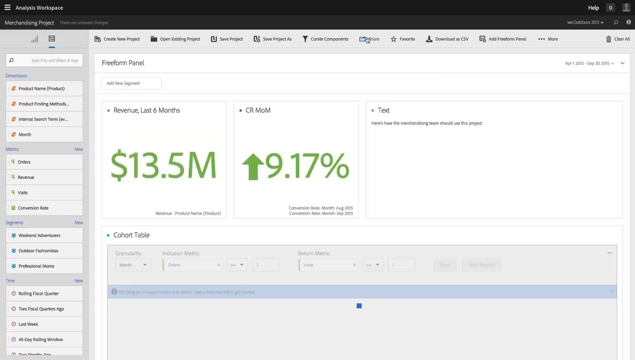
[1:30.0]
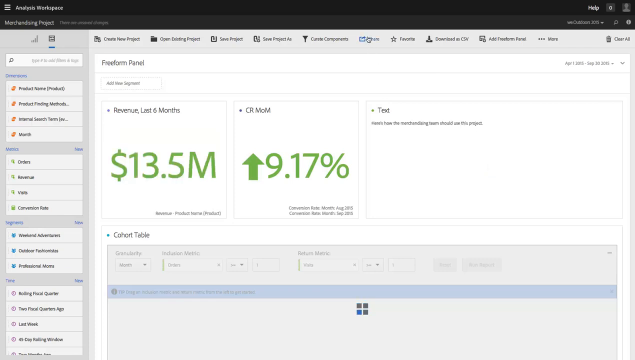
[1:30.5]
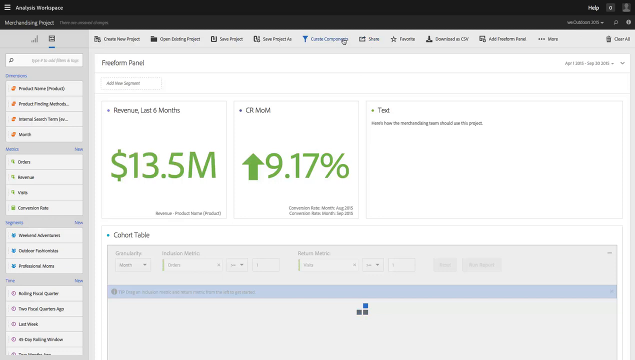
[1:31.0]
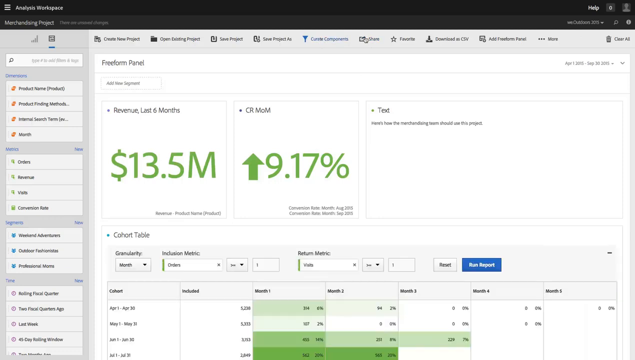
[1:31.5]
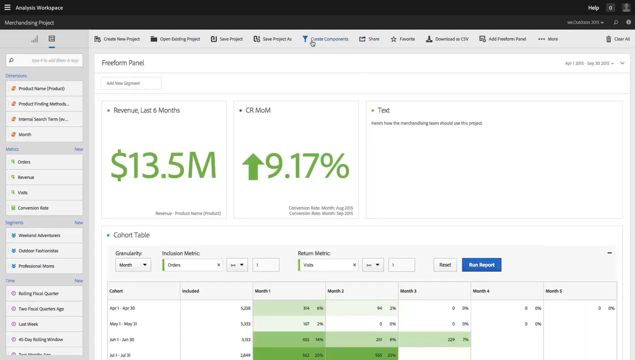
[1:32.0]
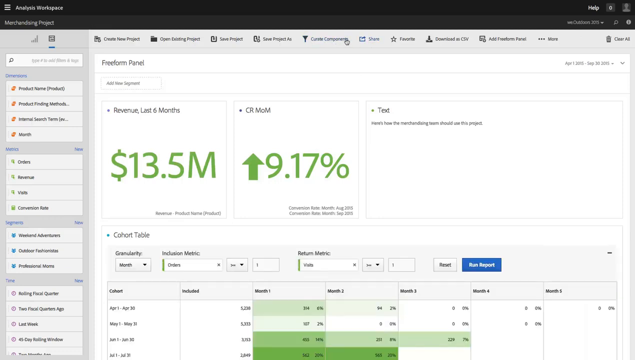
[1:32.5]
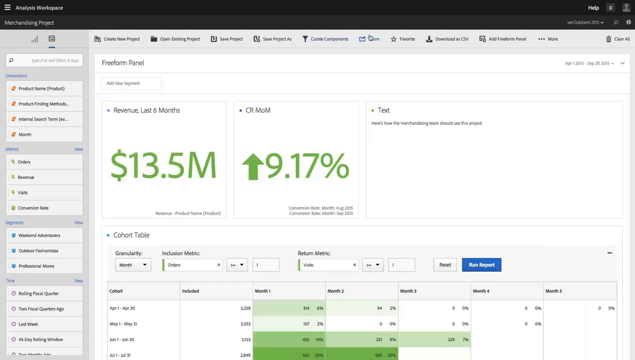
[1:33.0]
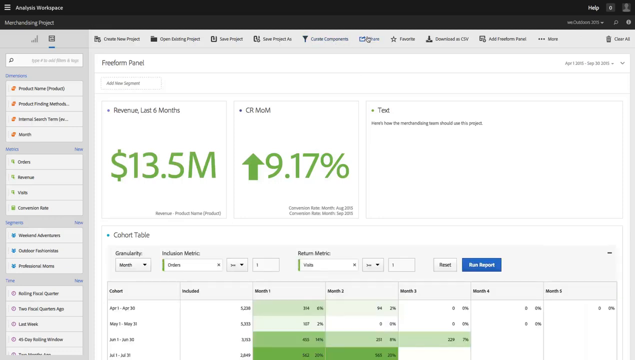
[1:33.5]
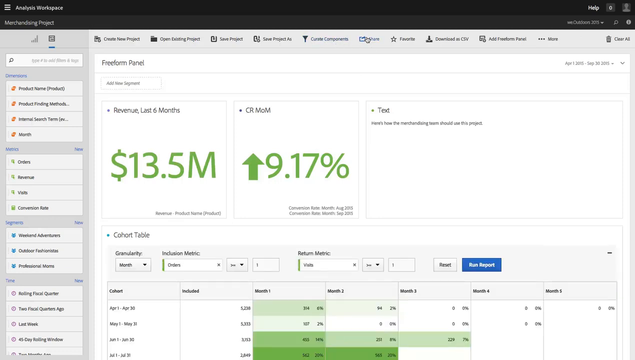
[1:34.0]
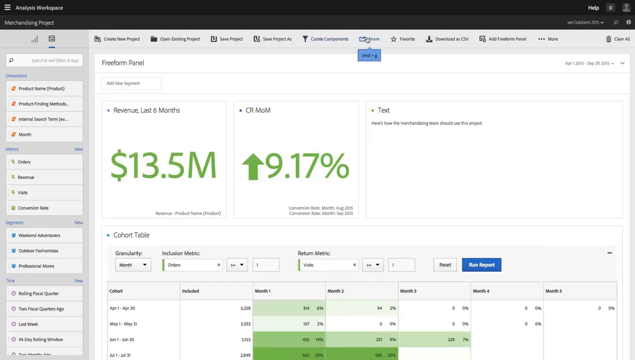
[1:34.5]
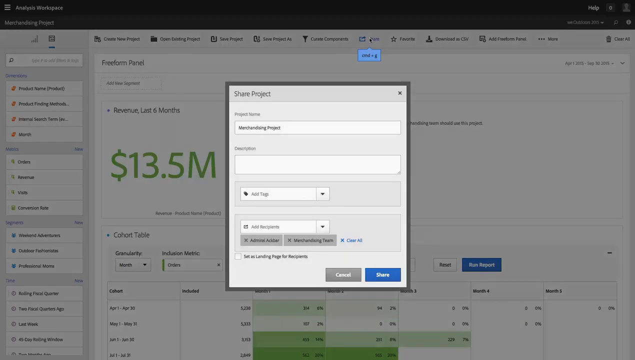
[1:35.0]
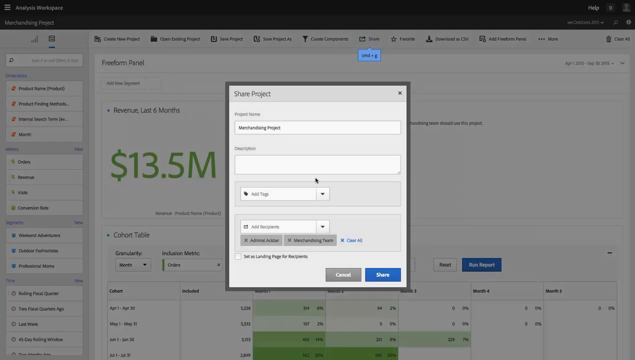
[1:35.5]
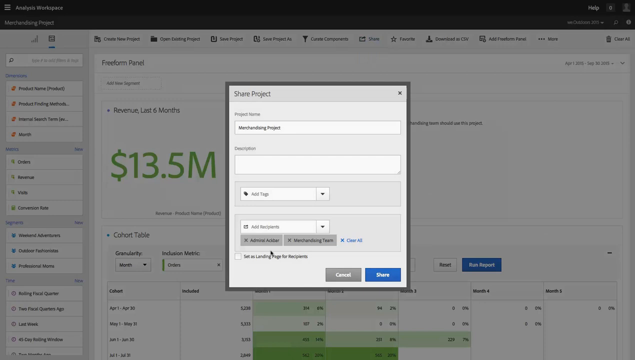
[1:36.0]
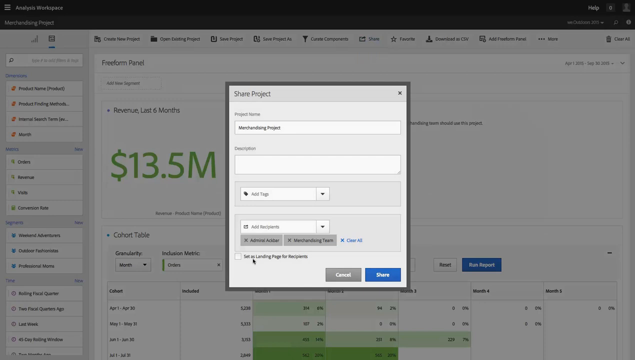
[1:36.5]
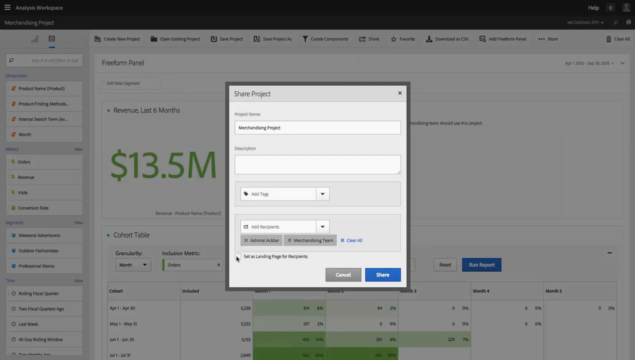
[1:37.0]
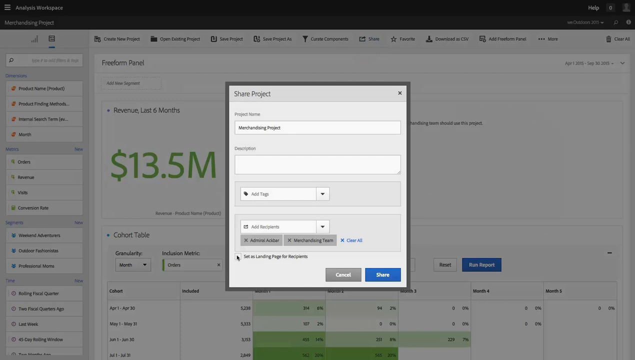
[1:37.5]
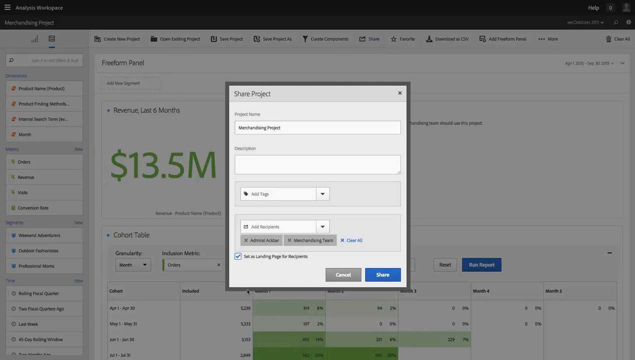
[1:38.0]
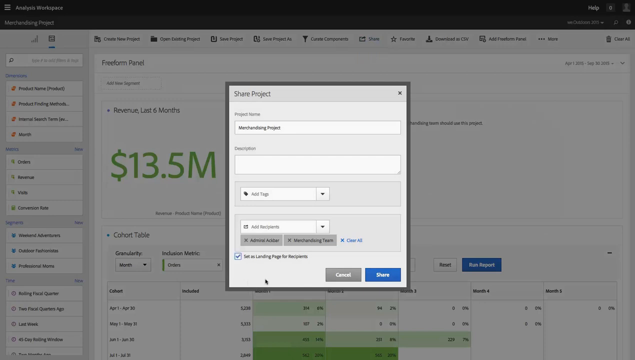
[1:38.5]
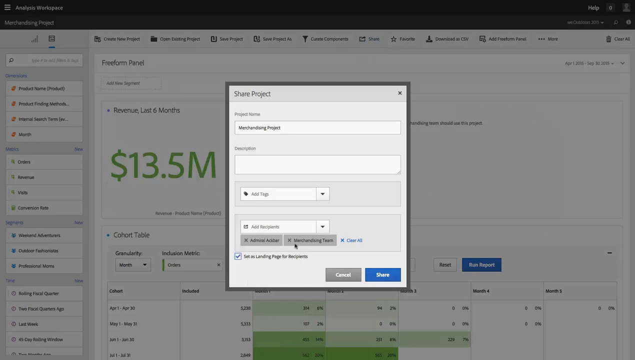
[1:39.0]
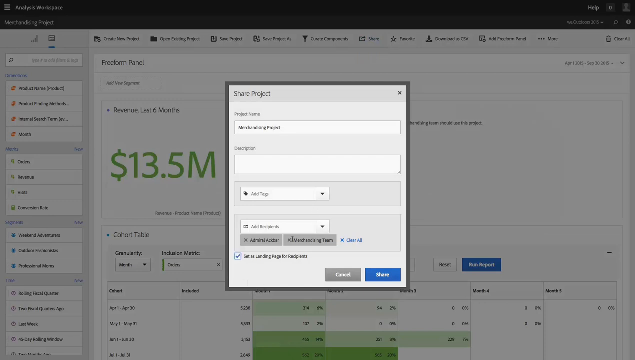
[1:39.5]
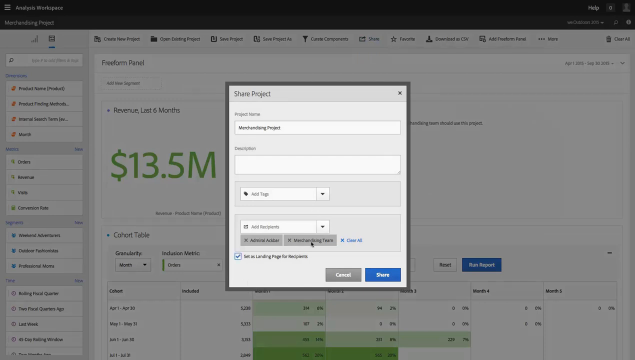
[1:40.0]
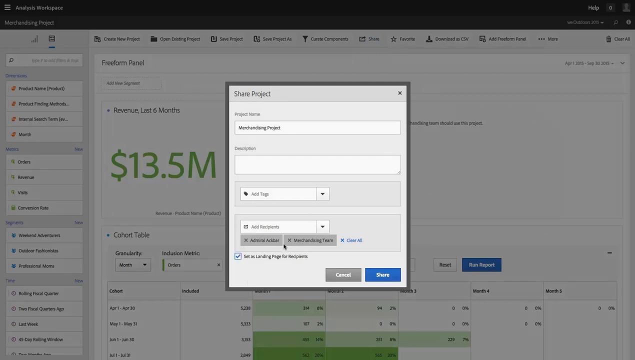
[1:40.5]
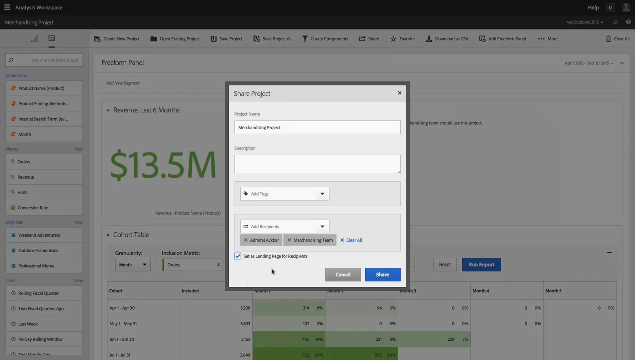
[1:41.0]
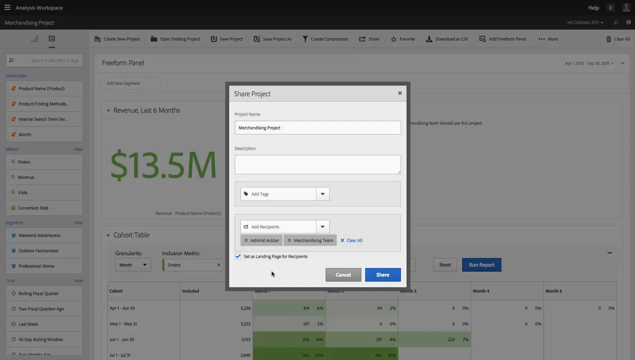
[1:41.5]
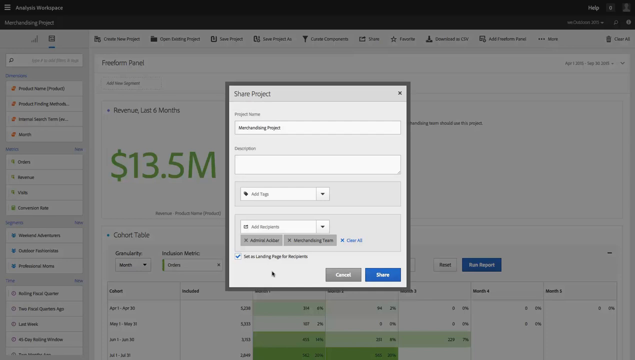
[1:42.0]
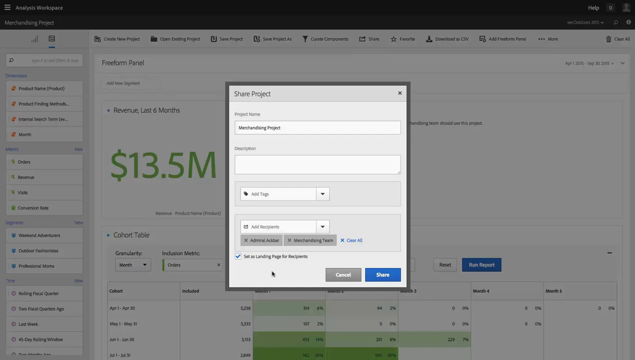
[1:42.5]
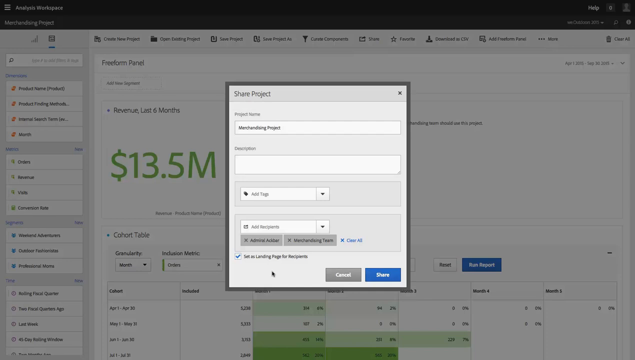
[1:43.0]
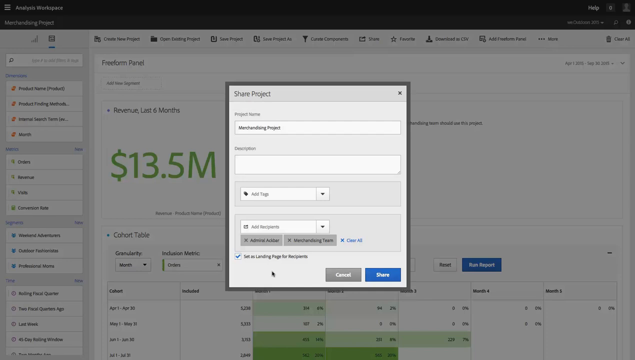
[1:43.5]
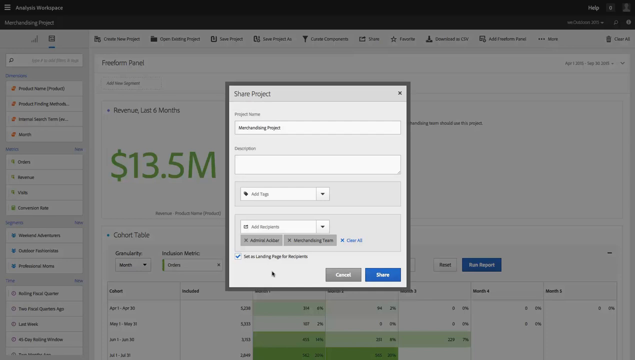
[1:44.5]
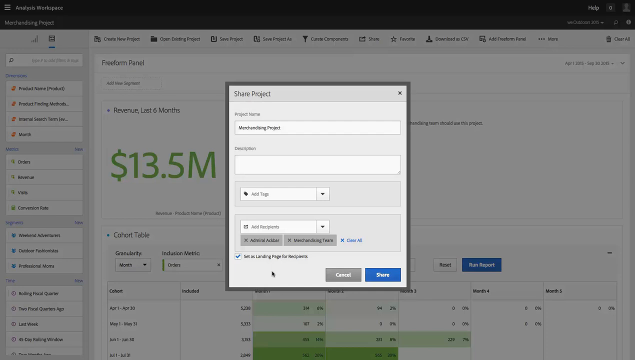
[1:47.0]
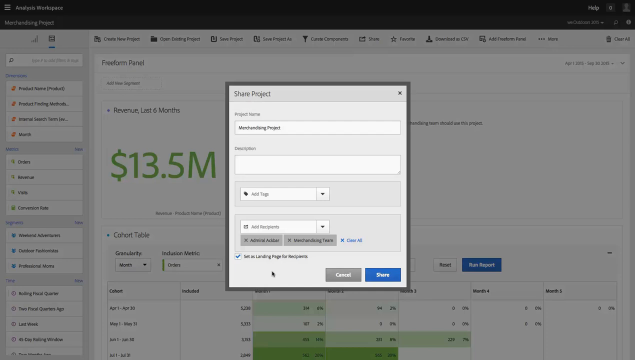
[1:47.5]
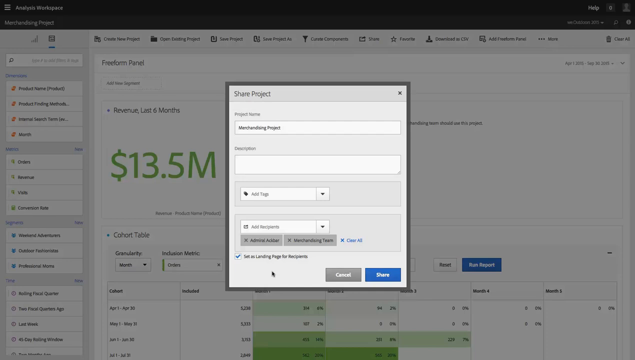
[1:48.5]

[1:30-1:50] The Freeform panel page shows revenue for the last six months at $13.5 million and CR MoM up 9.17%. The mouse cursor first hovers at the top center between two options, "Components" and "Share," switching back and forth between them until it finally clicks "Share." A window titled "Share Project" comes up, showing the project name "Merchandising Project." The pointer moves from the center to the bottom-left area of the window and checks a box labeled "Set as landing page for recipients." It then hovers over a couple of pieces of information above that checkbox line, and then sits below the checkbox line near the bottom-left corner of the Share Project window for several seconds, staying there.